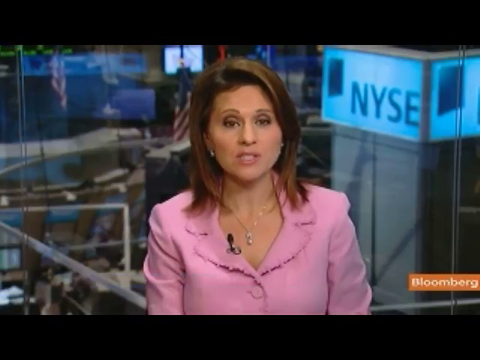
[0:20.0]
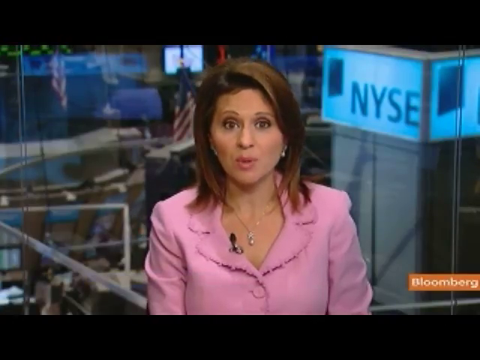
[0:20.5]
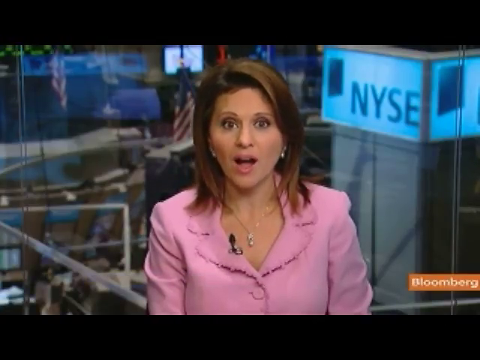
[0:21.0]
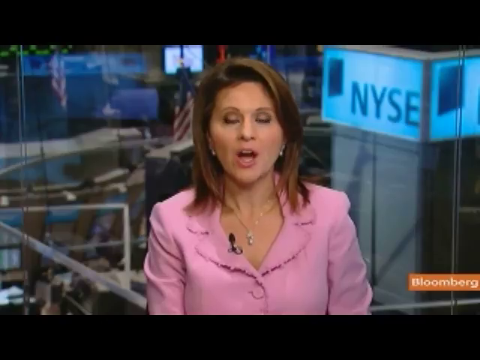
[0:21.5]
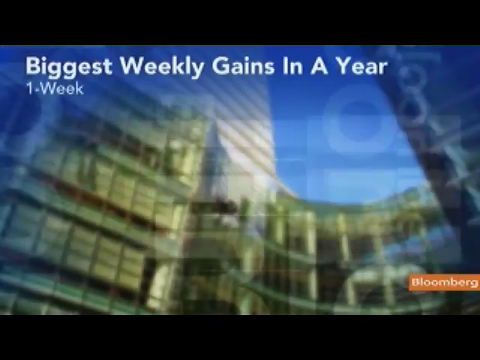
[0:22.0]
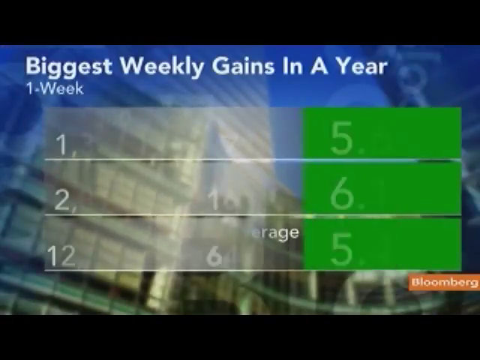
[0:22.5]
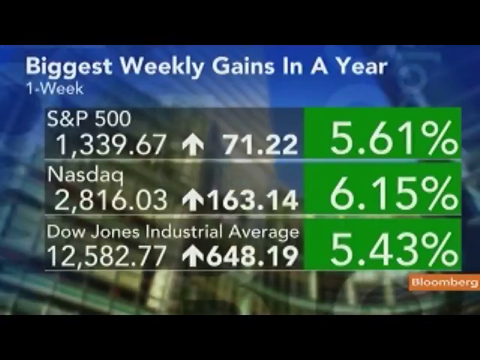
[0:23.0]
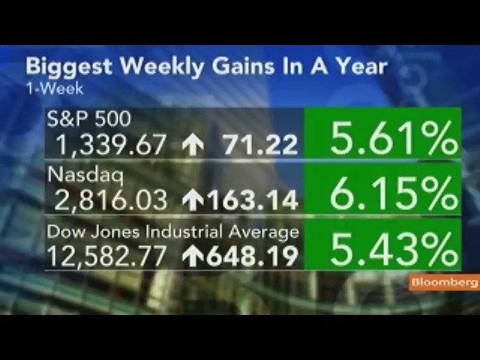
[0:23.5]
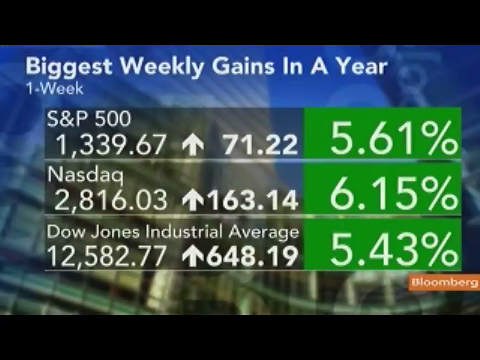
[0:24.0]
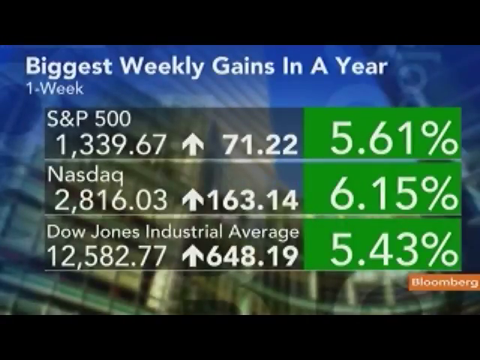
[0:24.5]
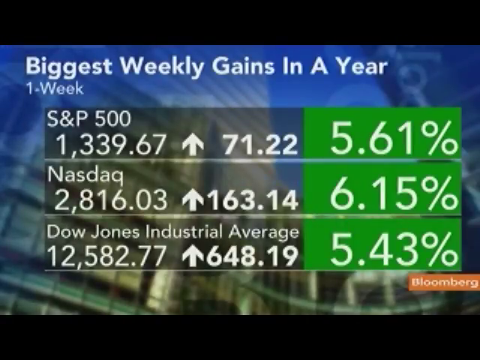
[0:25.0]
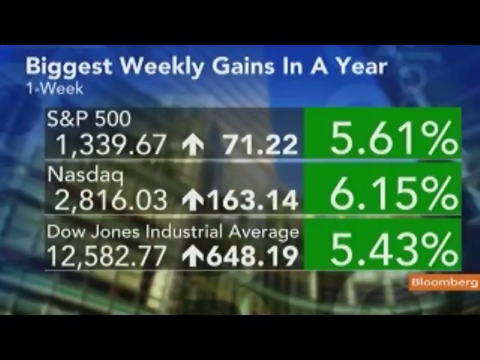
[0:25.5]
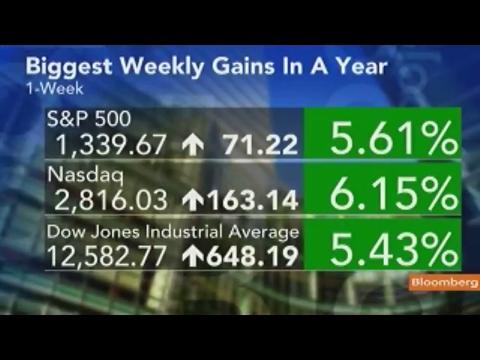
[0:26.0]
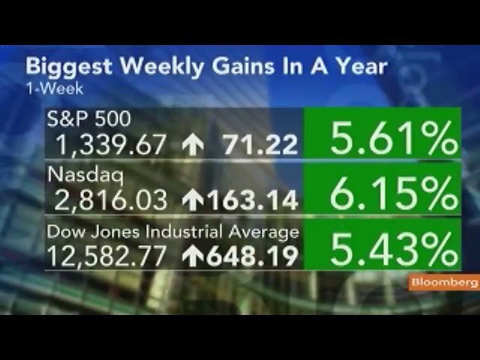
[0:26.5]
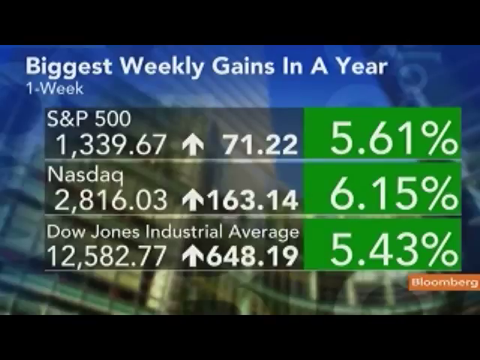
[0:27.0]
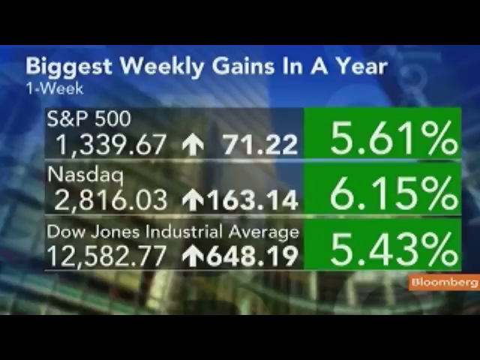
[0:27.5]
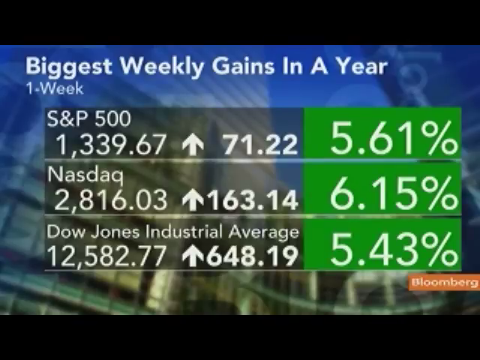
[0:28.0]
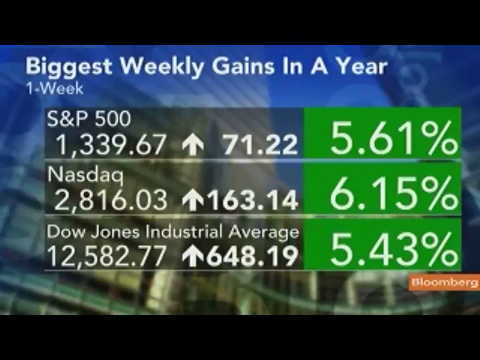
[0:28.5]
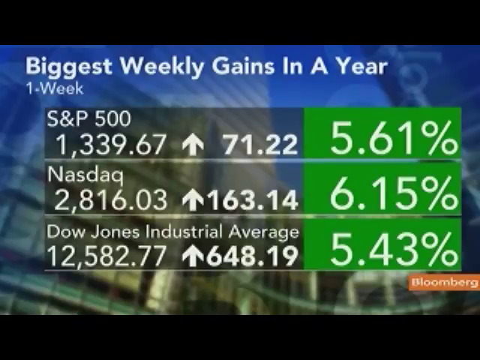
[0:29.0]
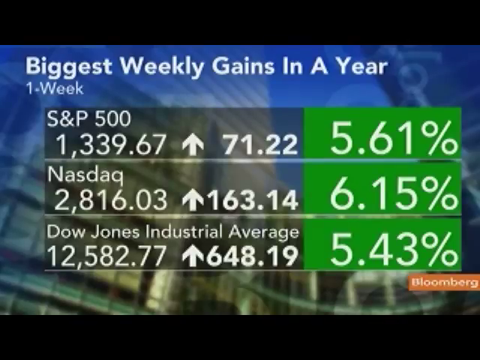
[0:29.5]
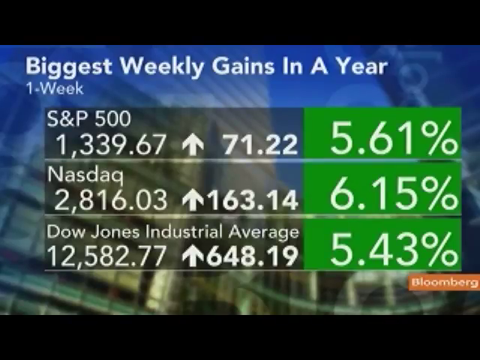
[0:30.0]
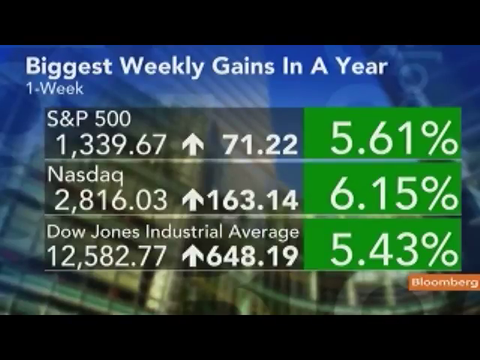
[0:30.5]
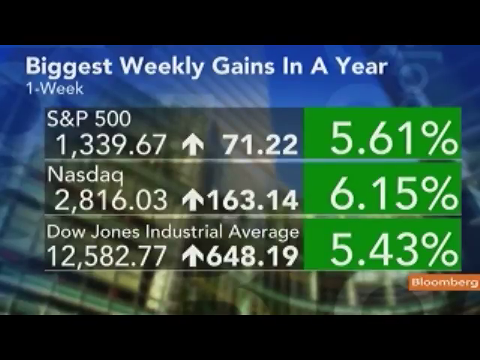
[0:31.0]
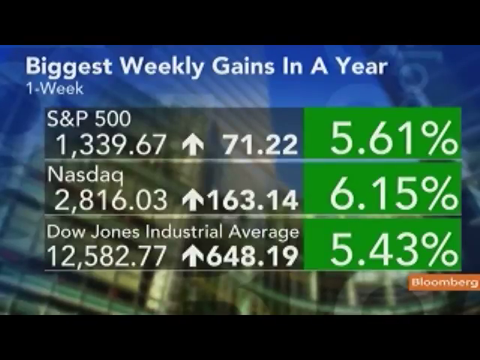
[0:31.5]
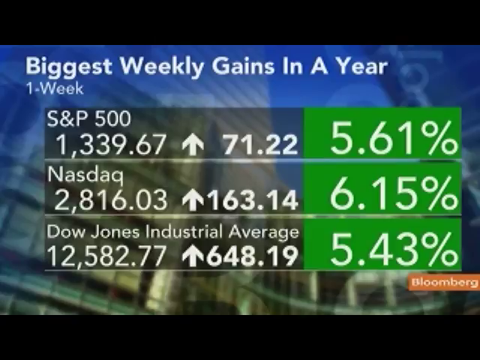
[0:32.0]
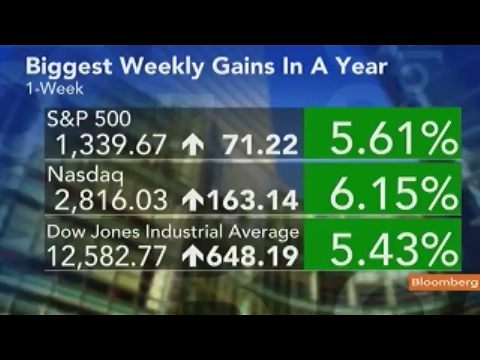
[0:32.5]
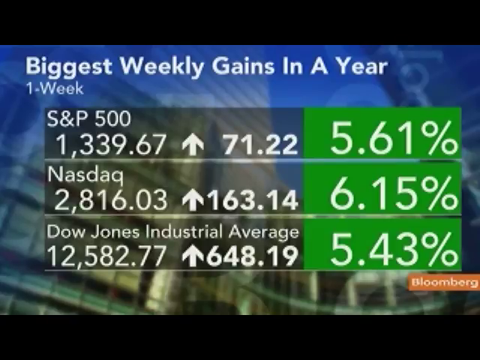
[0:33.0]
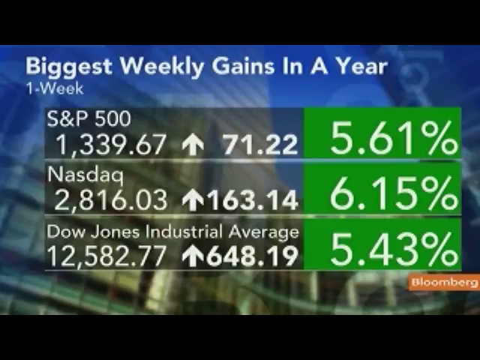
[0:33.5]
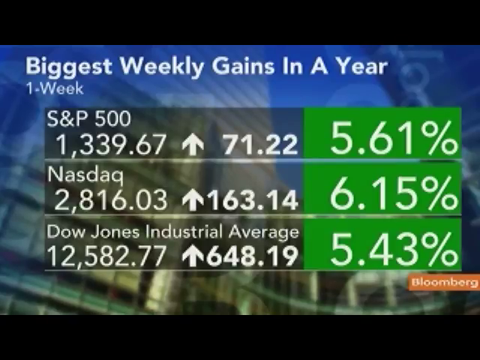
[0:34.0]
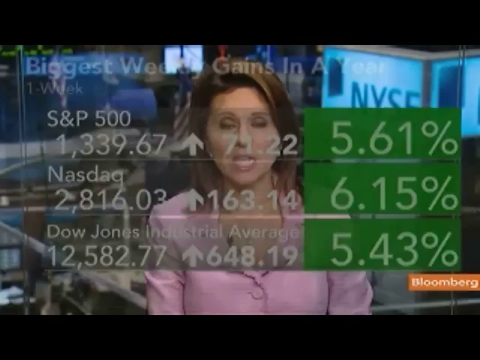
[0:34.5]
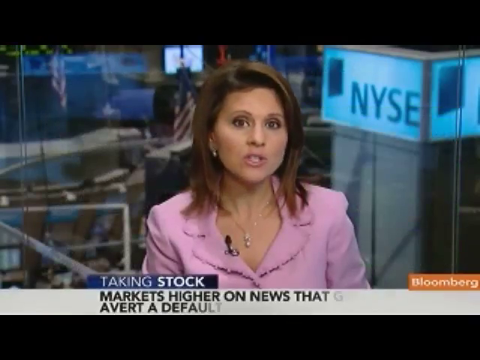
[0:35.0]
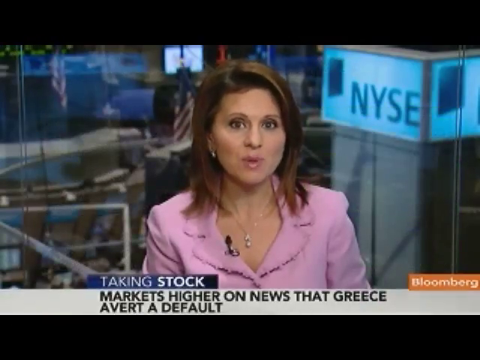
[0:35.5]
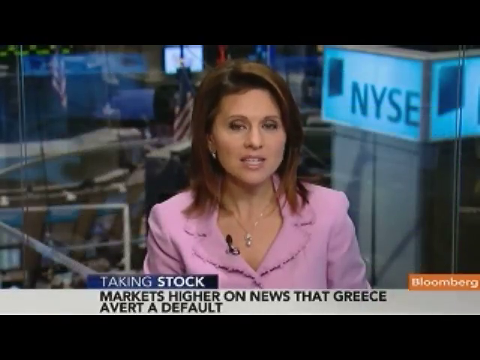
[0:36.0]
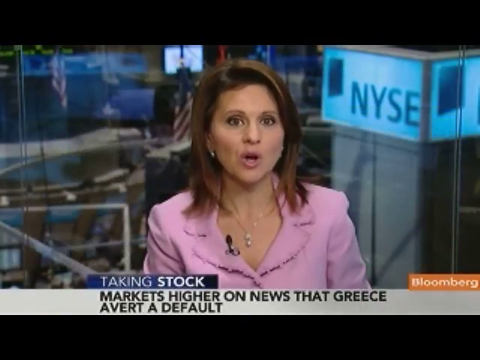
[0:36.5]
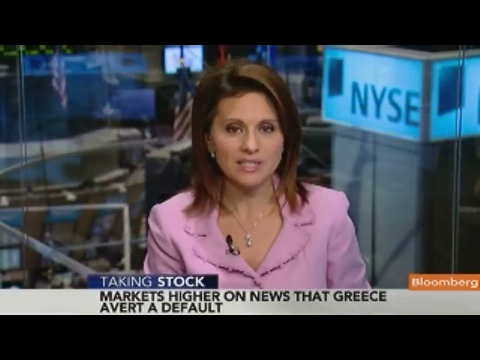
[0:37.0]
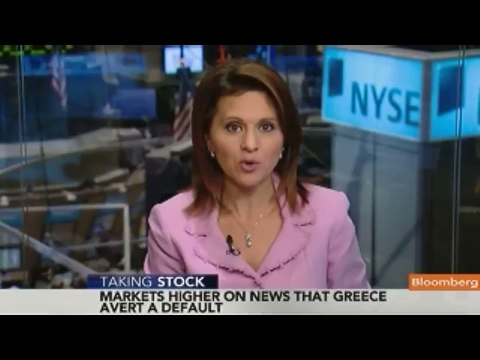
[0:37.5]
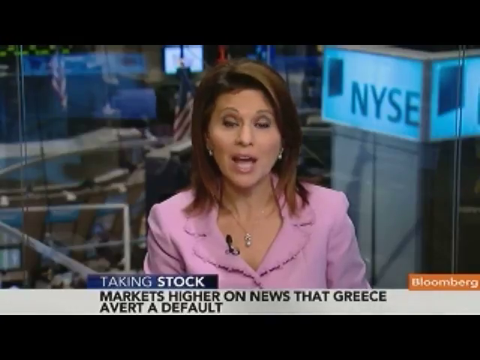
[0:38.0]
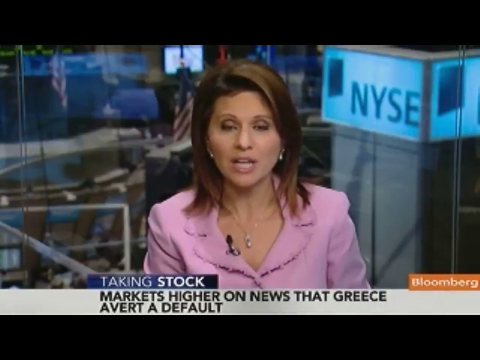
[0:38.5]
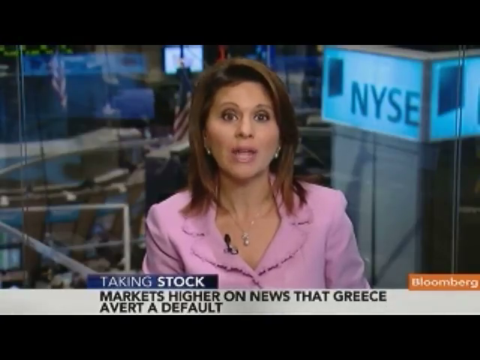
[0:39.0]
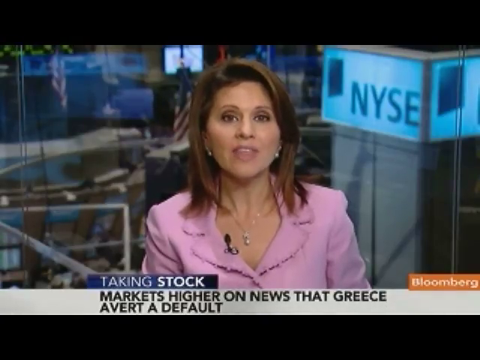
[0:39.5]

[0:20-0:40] In the Bloomberg news broadcast, a woman in her mid-30s or 40s wearing a pink outfit talks to the camera. She has a microphone attached to her right lapel, a necklace with a pendant hanging from it, earrings in both ears and brown hair. Behind her is a graphic showing the New York Stock Exchange, or NYSE, and the Bloomberg logo is in the lower right. The screen then changes to stock market graphics, with everything in green. The top reads "biggest weekly gain in a year" and below that "one week." Below that are the S&P 500, the Nasdaq and the Dow Jones Industrial Average, all in green on the right: the S&P is up 5.61%, the Nasdaq is up 6.15%, and the Dow Jones is up 5.43%.